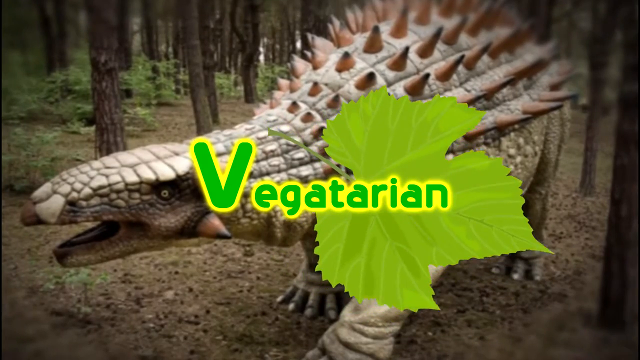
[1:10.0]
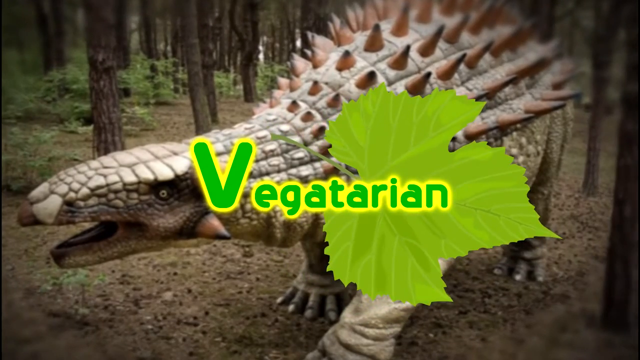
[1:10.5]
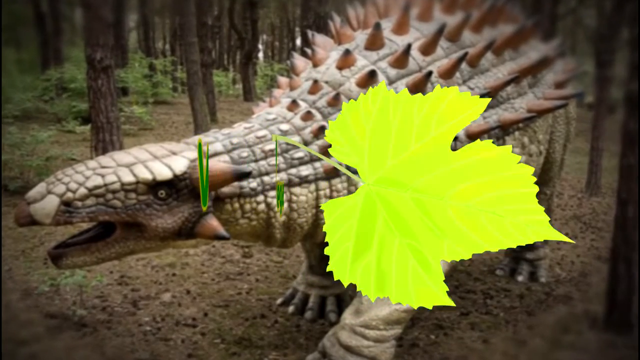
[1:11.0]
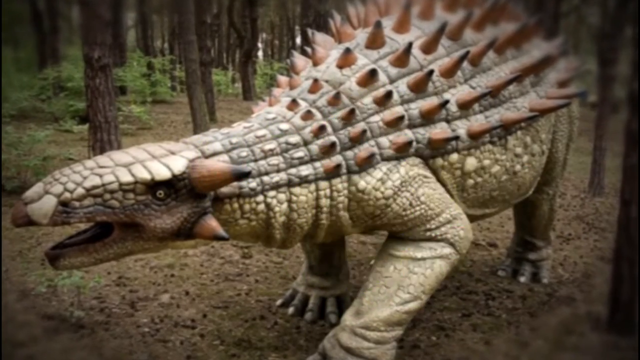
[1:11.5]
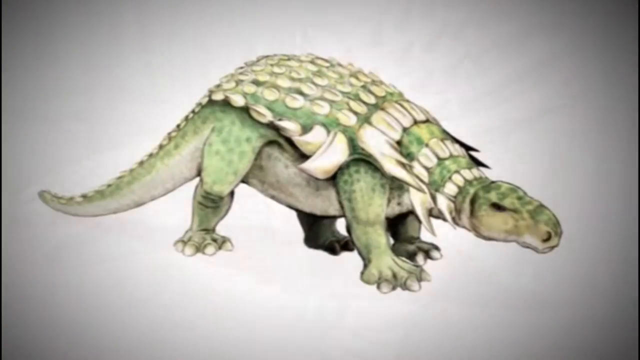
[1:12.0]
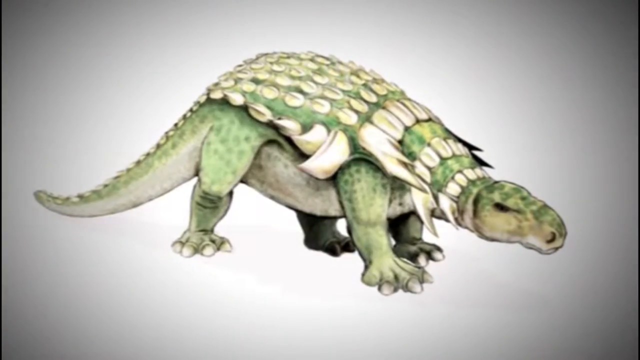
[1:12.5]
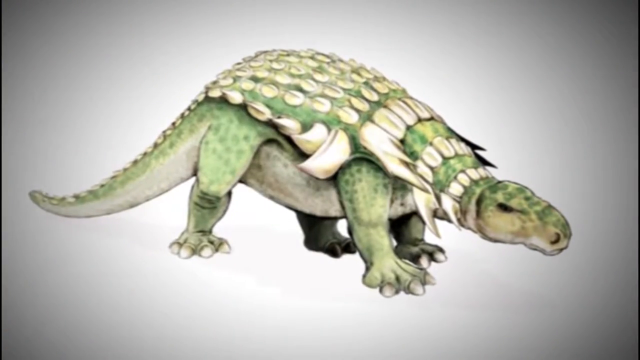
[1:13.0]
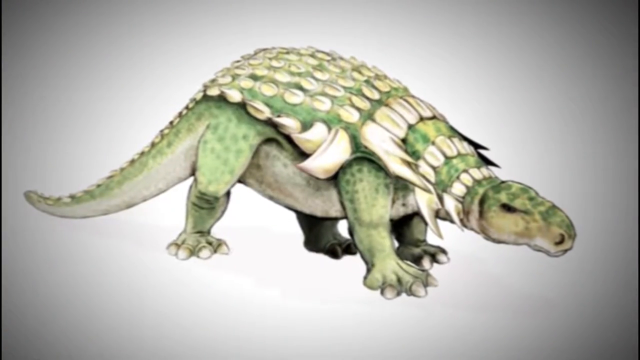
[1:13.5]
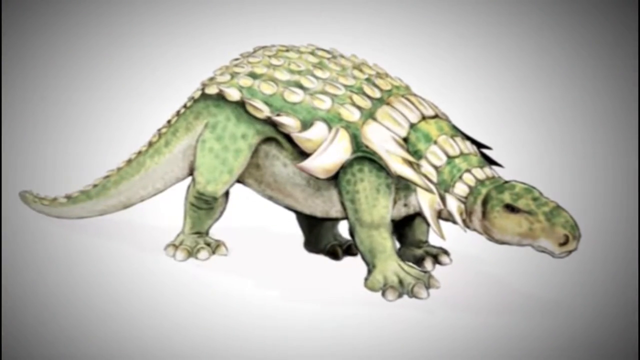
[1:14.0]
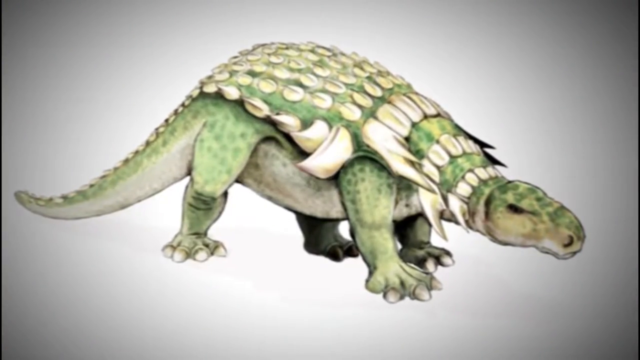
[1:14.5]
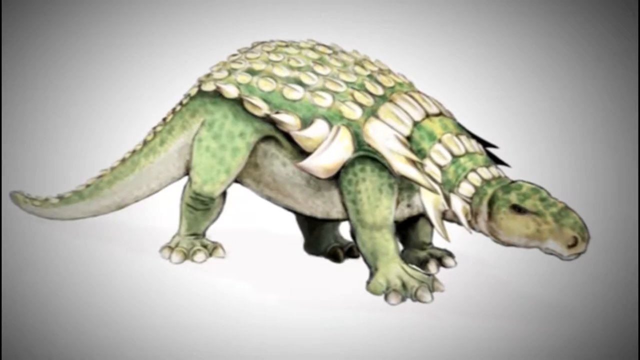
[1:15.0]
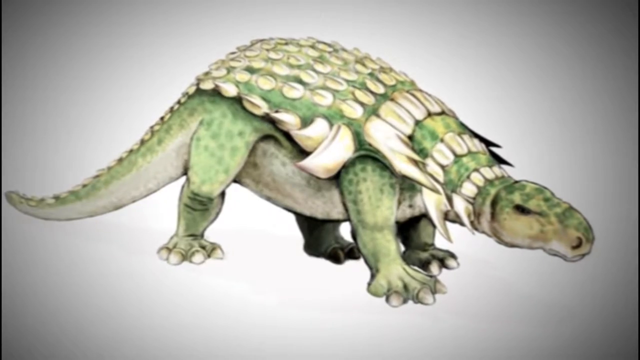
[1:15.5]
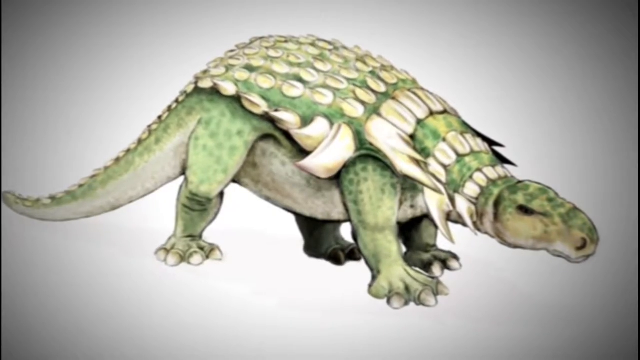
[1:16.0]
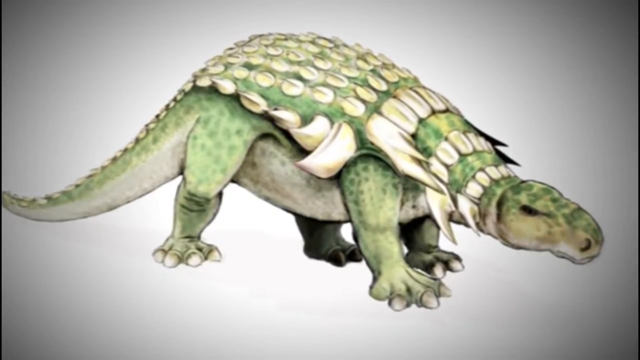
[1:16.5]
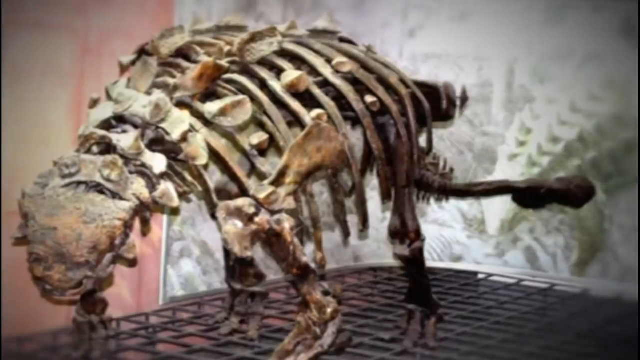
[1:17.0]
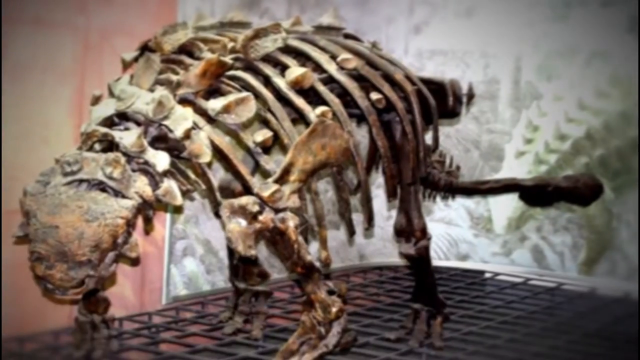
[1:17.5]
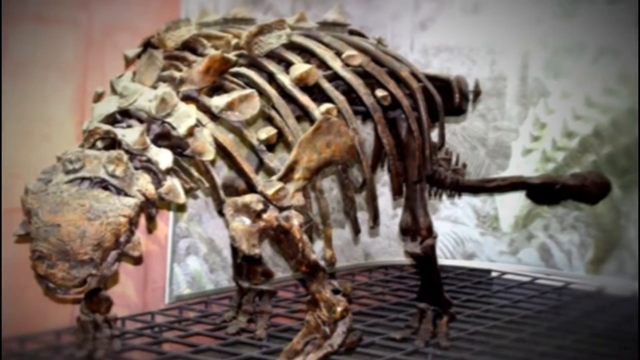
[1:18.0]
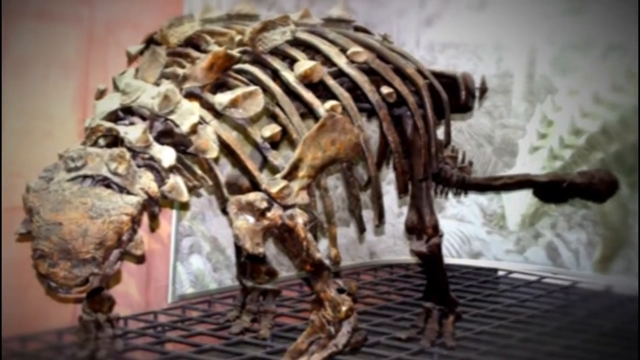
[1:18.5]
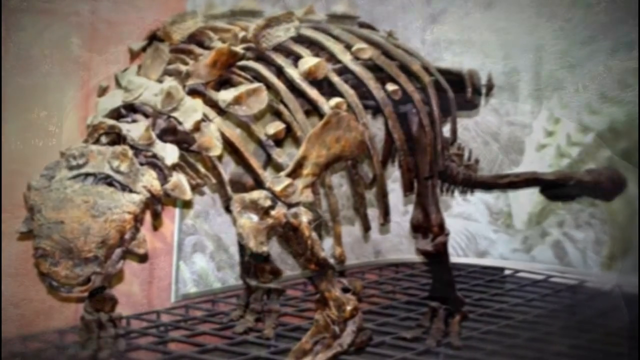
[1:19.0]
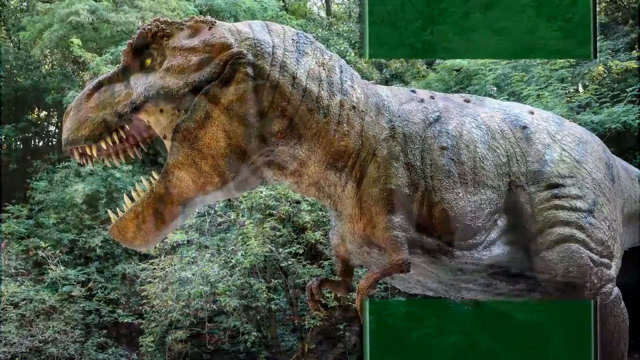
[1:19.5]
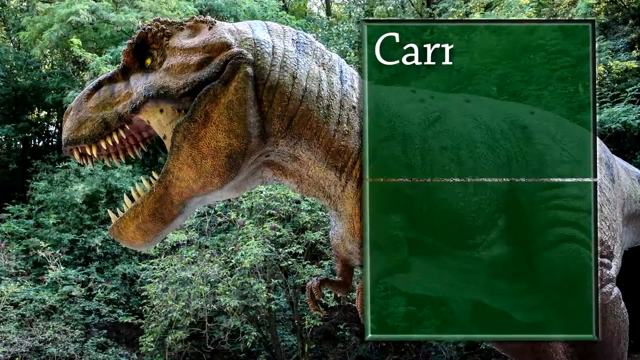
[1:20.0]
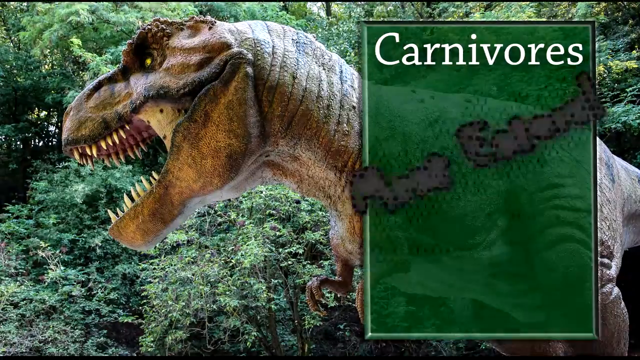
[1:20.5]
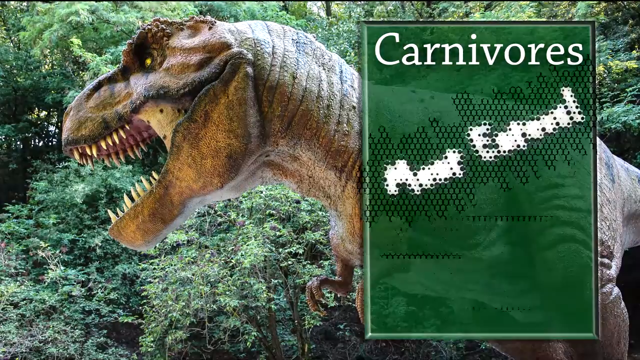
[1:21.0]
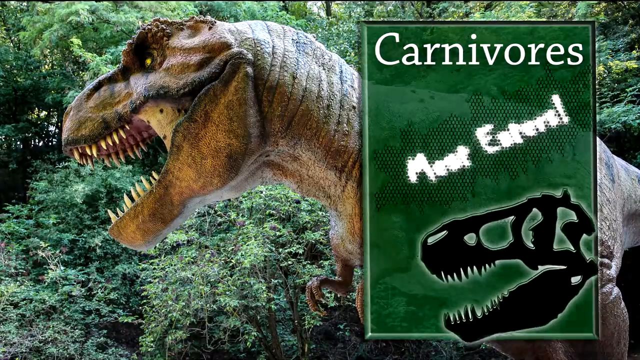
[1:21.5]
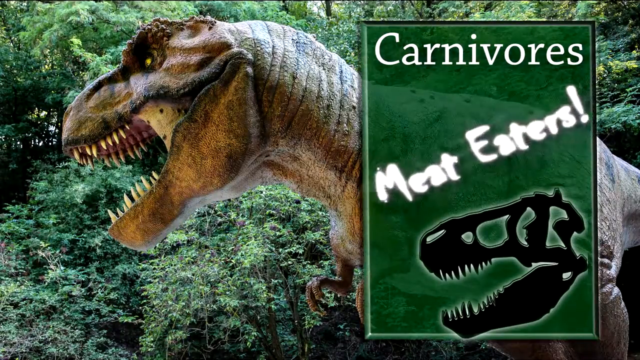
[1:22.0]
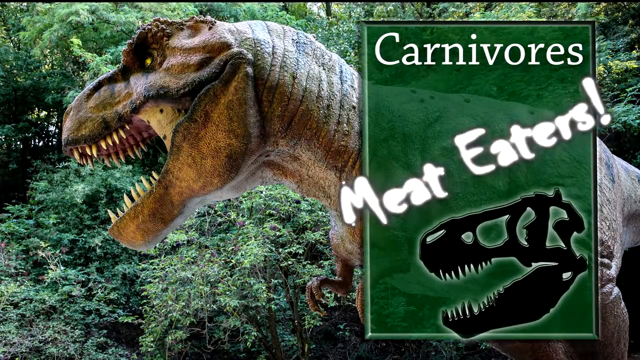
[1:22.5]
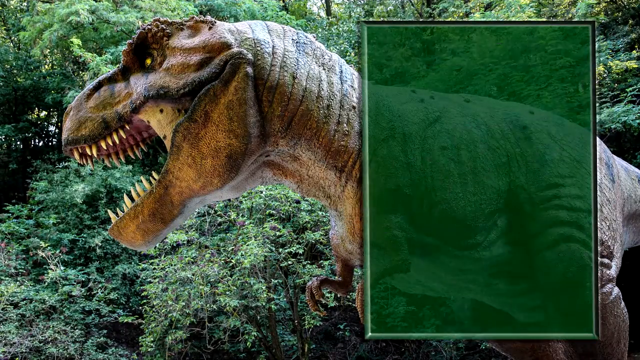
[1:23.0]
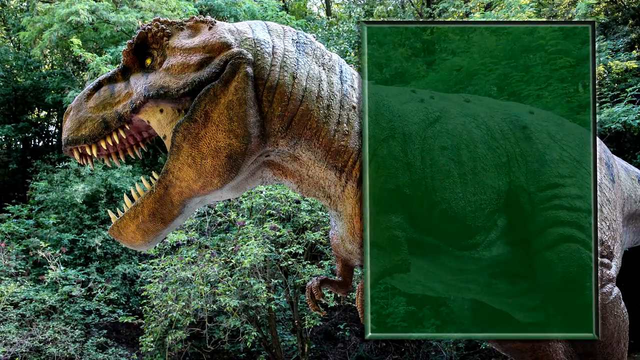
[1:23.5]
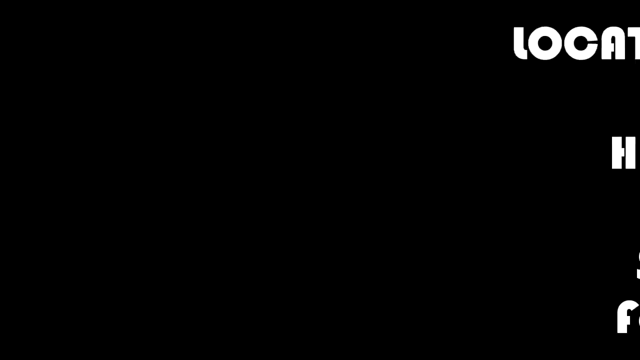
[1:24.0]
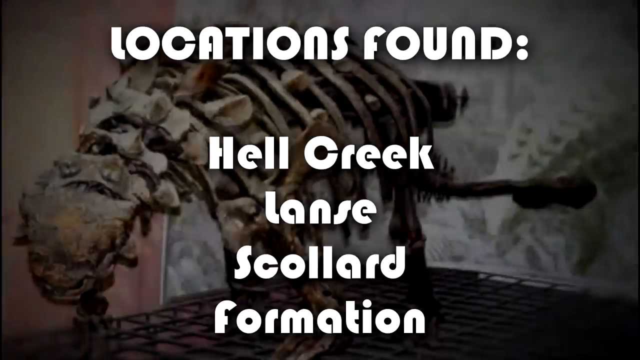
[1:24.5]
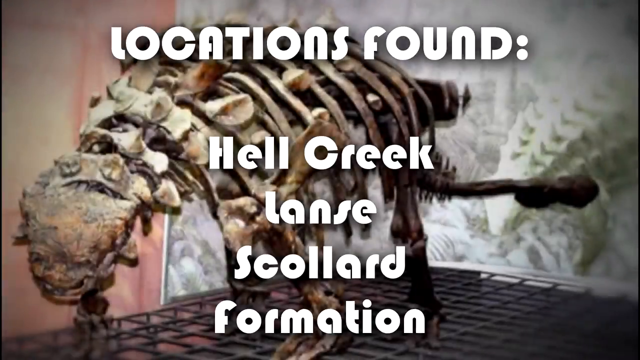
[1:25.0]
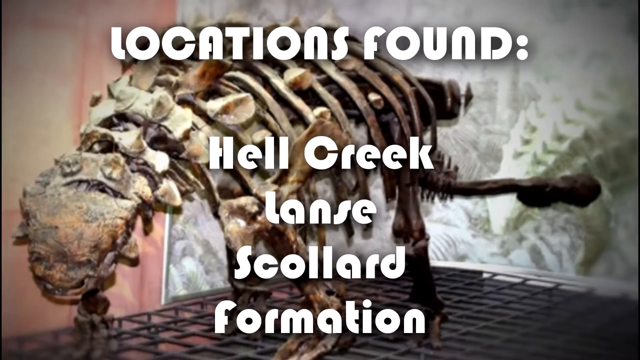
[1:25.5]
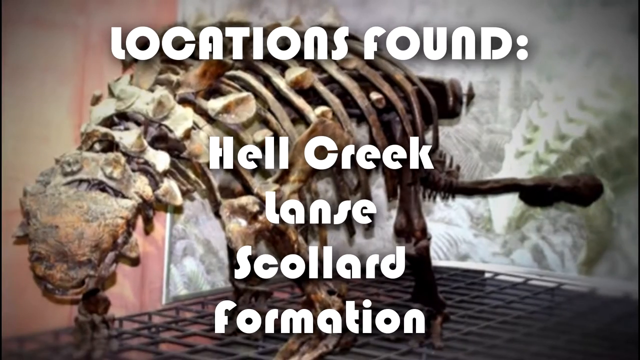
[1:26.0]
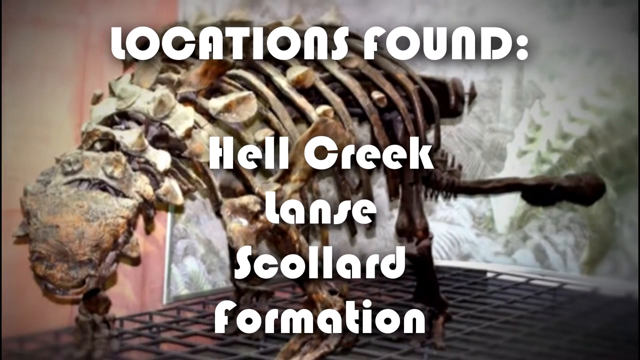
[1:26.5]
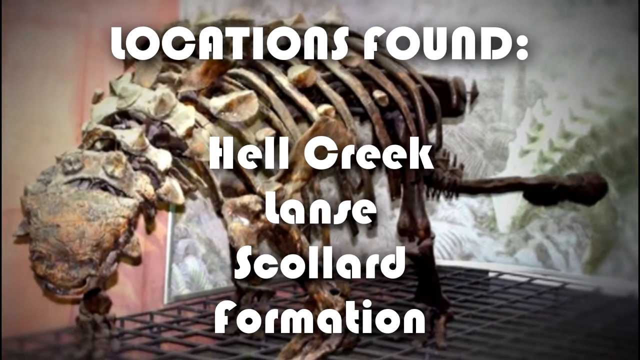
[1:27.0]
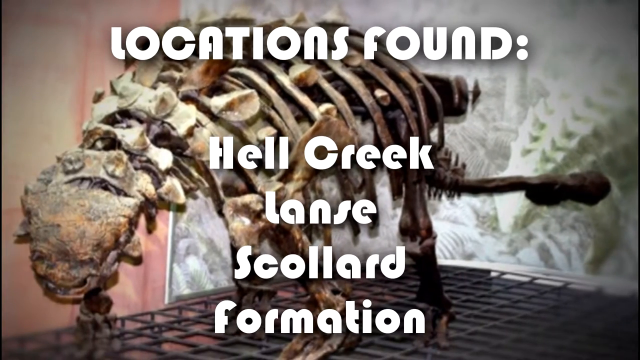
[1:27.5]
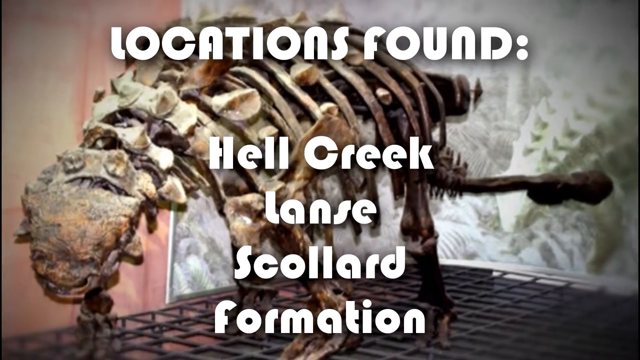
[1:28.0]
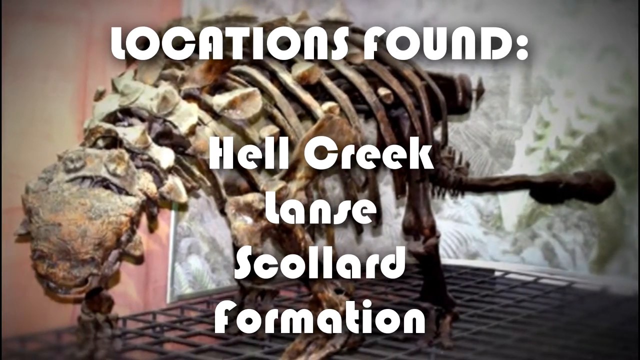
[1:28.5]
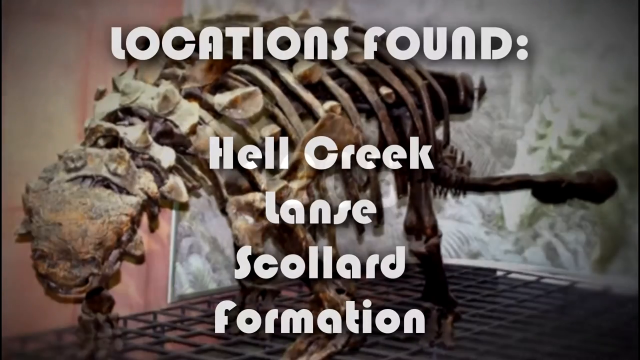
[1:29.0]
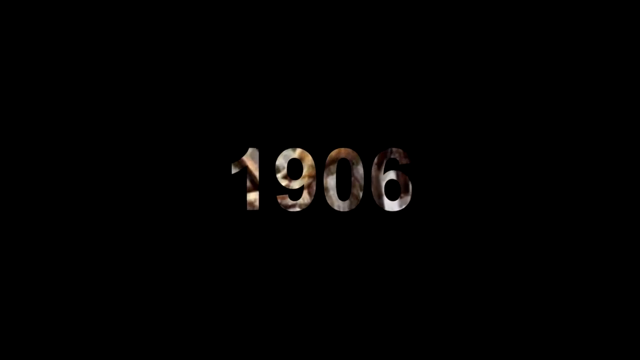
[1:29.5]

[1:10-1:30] The word "vegetarian" is written in green text that matches the color of the leaf behind it, surrounded by a glowing yellow border. The animation flips around a few times before fading out. The same drawing of the green dinosaur shown previously appears a second time and is slowly zoomed in on. Another image of the fossilized dinosaur is shown from a different angle. A larger dinosaur that looks to resemble a T-Rex is then shown. A translucent green rectangle, bordered half in black and half in white, appears on the right side of the screen, with a silhouette of a dinosaur skull fossil at its bottom. On top of the rectangle, white text says "carnivores." In the middle of the silhouette, a Halloween-style font reads "meat eaters!" The "meat eaters" text grows larger on the screen before all the text fades away. Next, the fossilized dinosaur is shown again with the title "Locations Found," with four locations listed underneath: "Hell Creek," "Lanse," "Scollard," and "Formation."